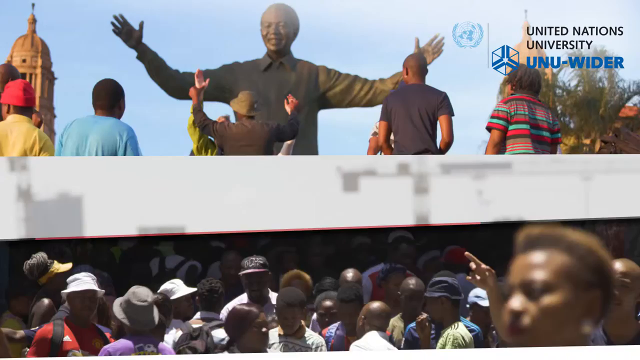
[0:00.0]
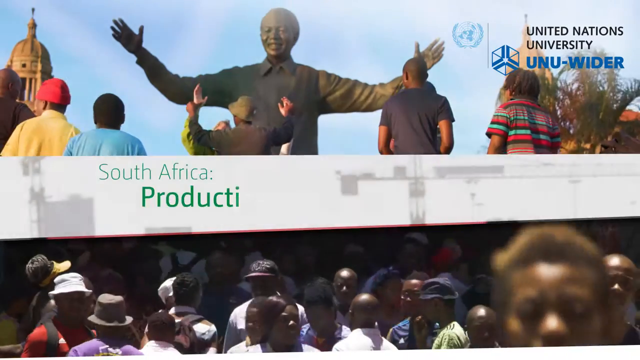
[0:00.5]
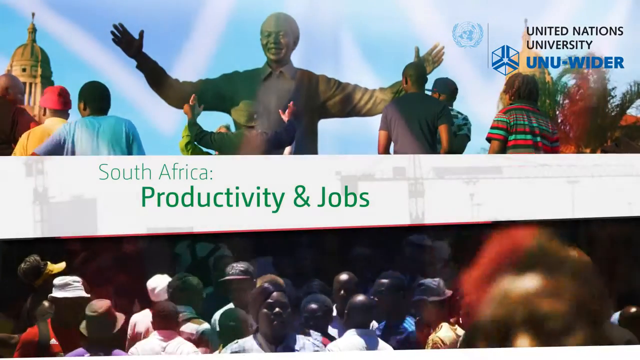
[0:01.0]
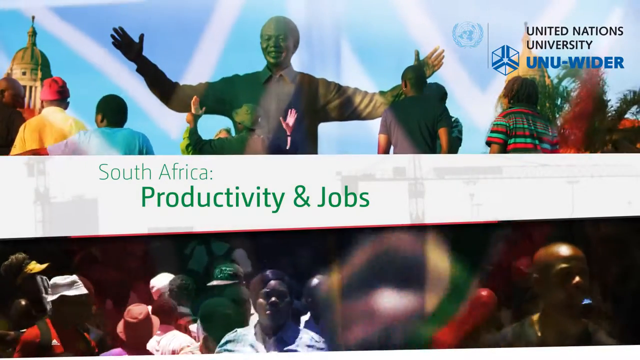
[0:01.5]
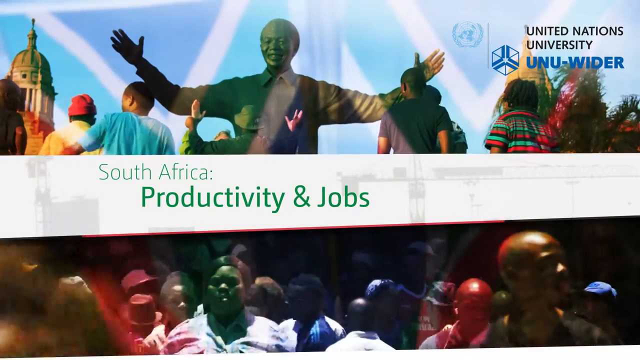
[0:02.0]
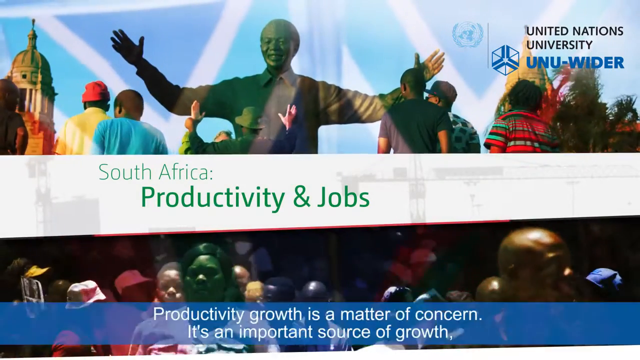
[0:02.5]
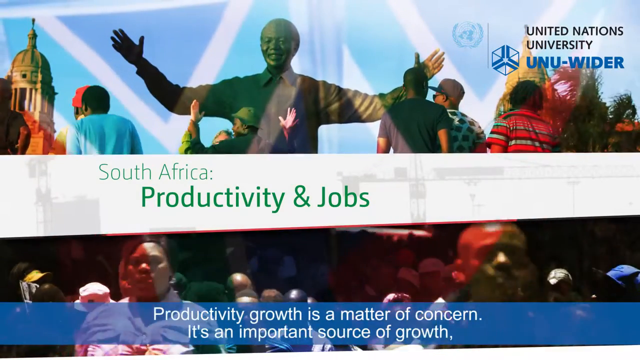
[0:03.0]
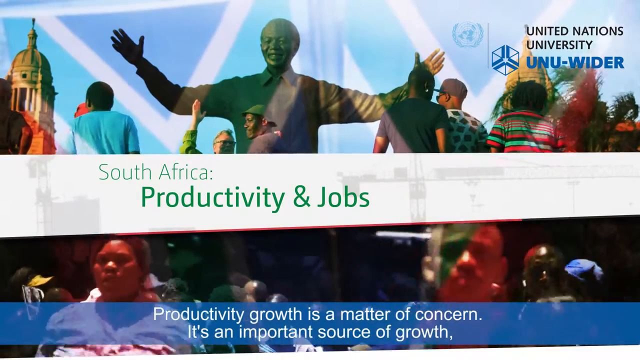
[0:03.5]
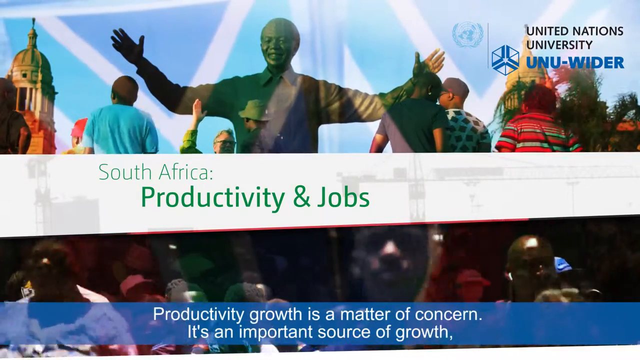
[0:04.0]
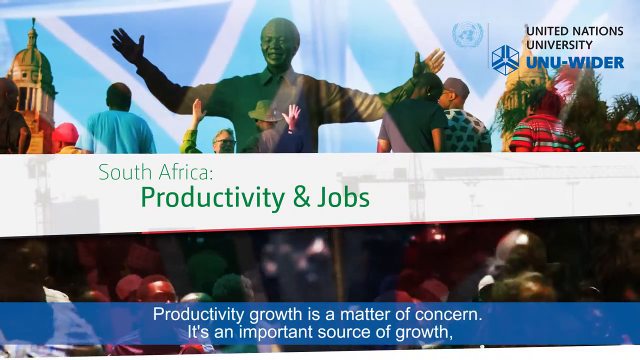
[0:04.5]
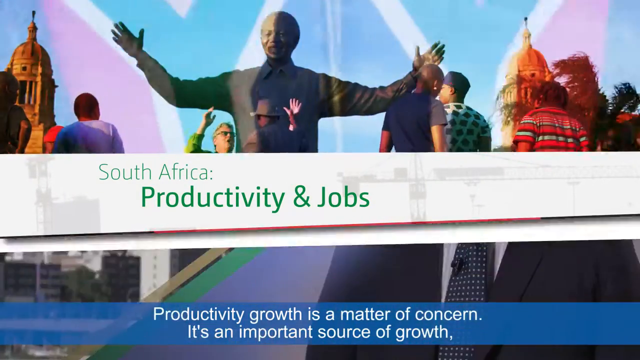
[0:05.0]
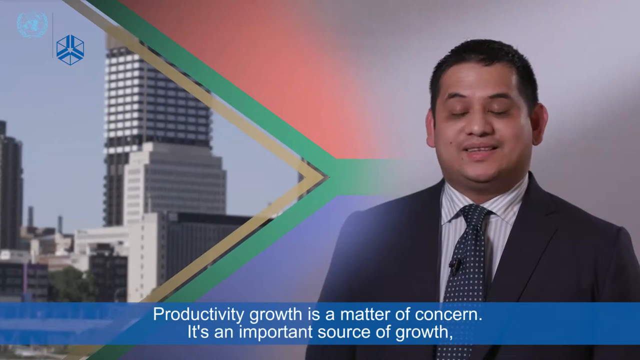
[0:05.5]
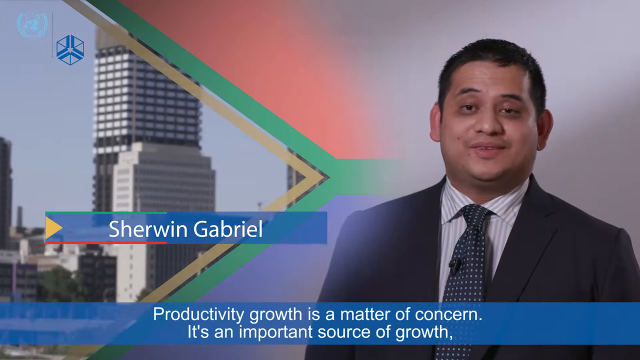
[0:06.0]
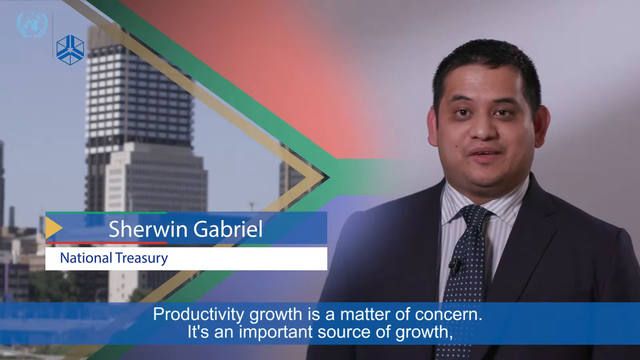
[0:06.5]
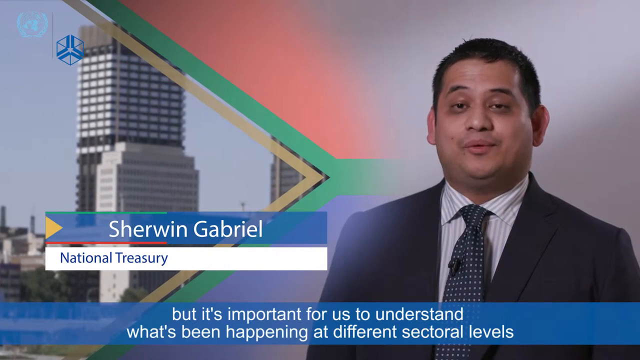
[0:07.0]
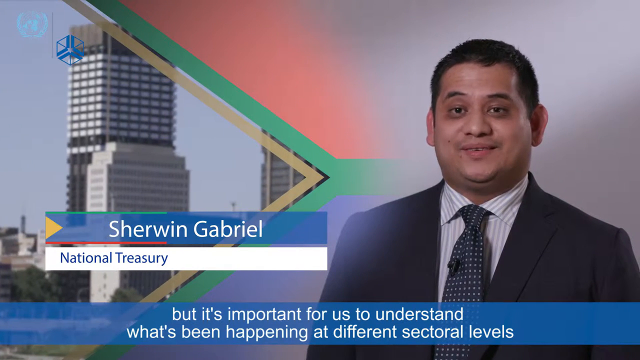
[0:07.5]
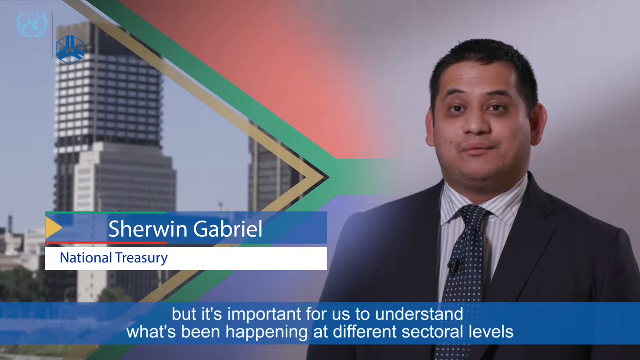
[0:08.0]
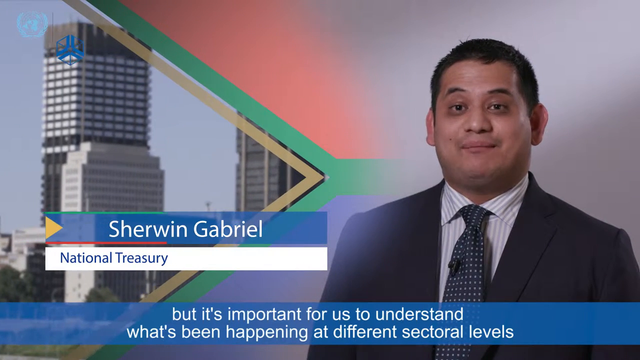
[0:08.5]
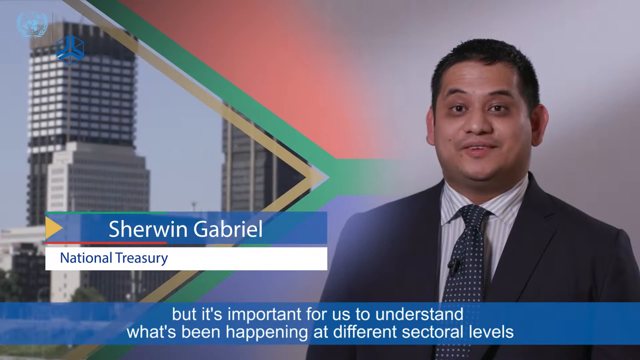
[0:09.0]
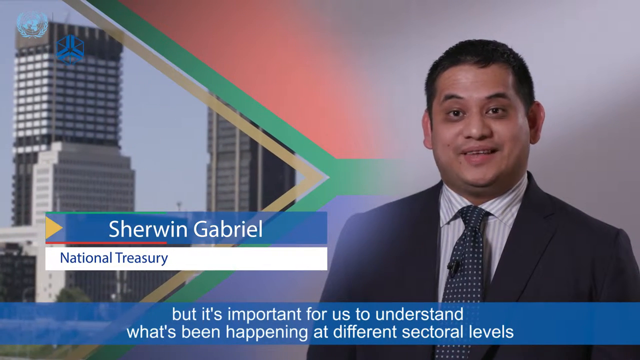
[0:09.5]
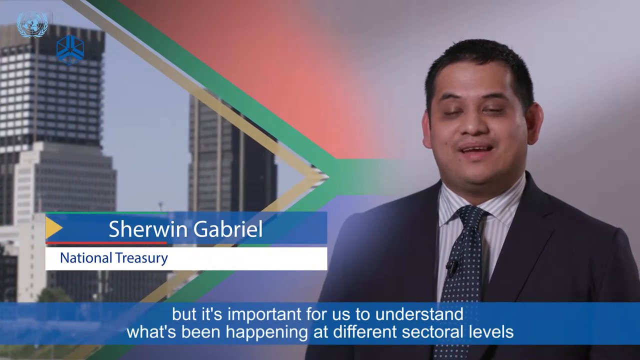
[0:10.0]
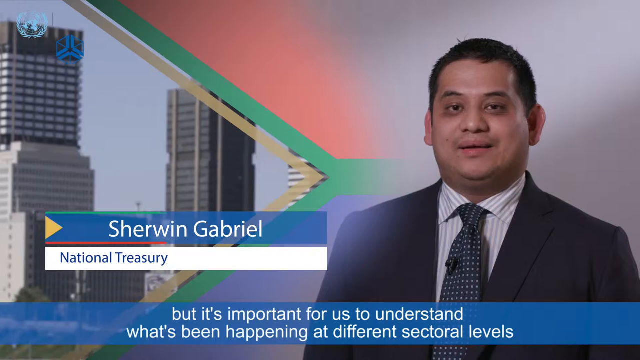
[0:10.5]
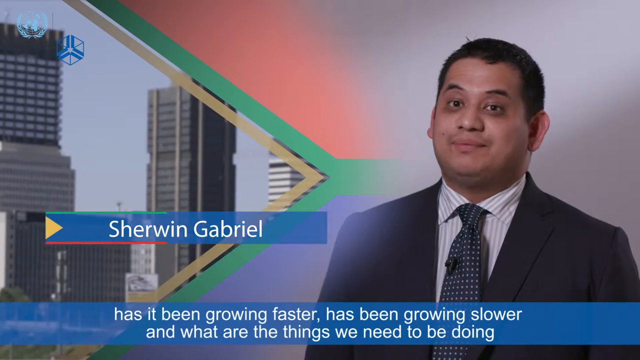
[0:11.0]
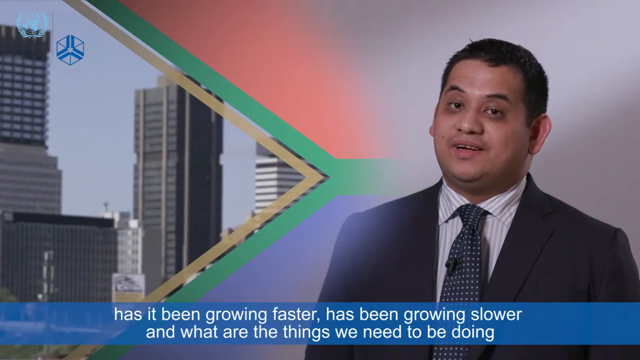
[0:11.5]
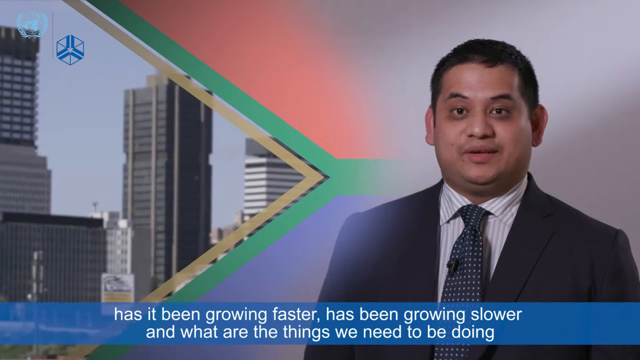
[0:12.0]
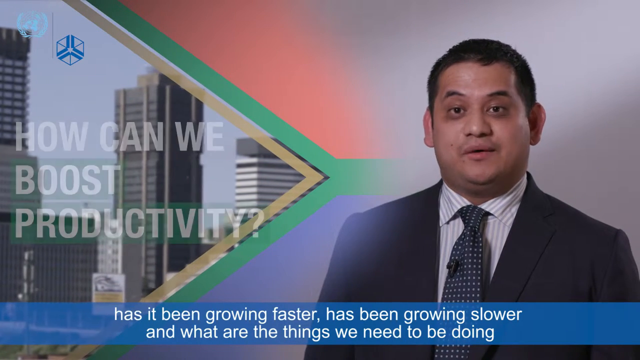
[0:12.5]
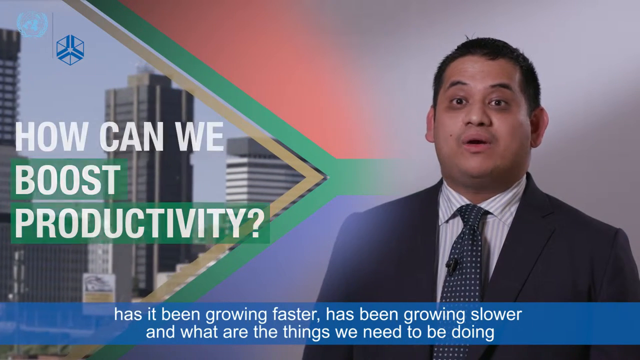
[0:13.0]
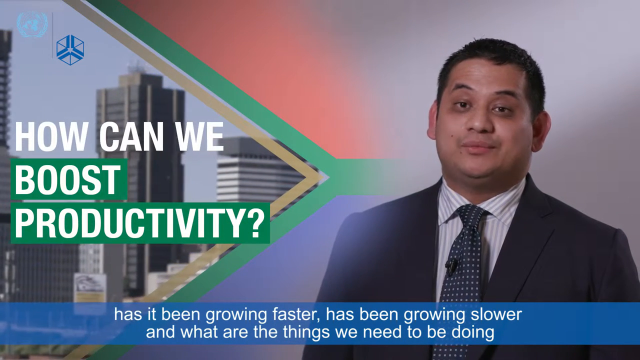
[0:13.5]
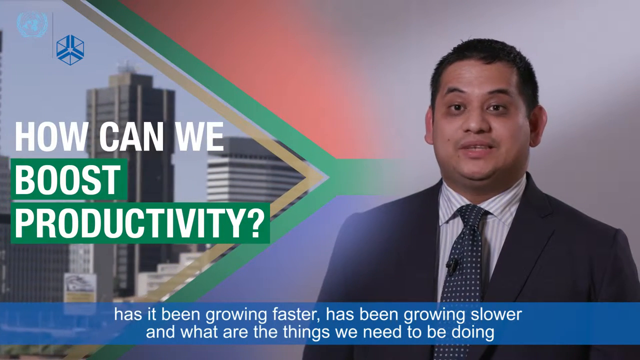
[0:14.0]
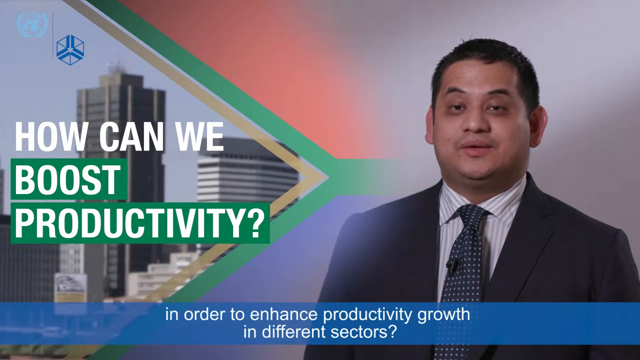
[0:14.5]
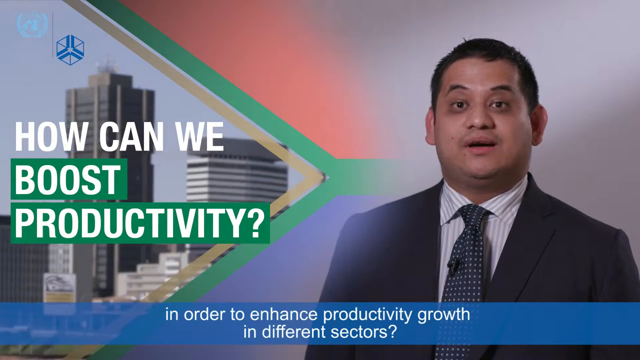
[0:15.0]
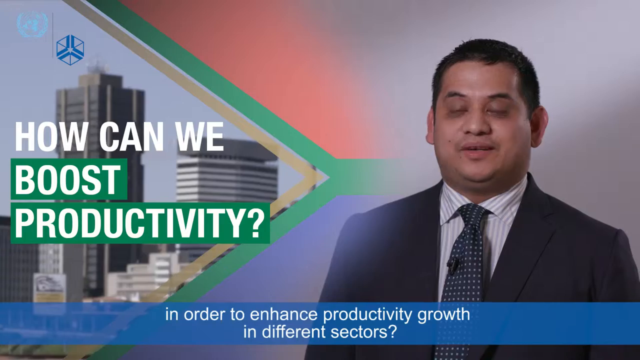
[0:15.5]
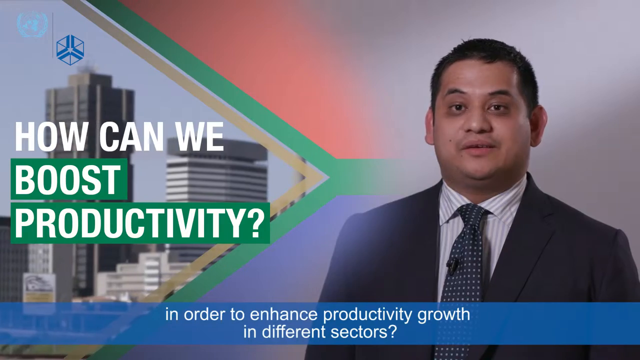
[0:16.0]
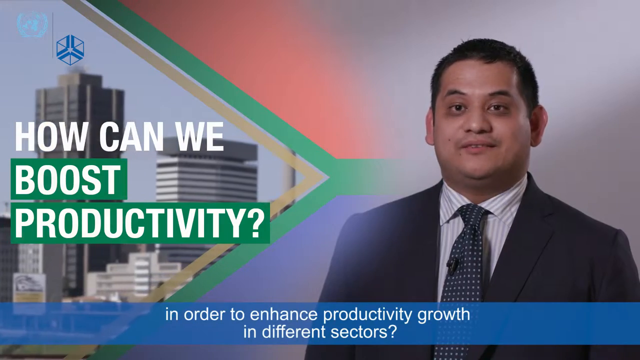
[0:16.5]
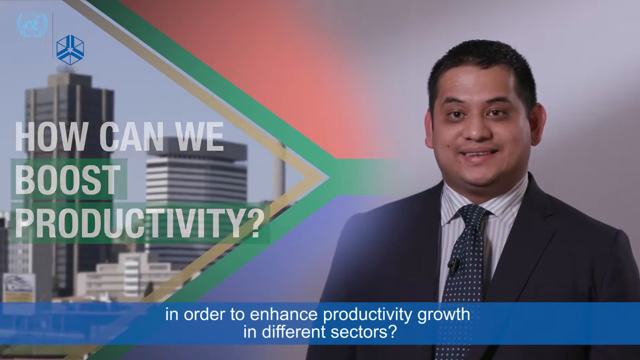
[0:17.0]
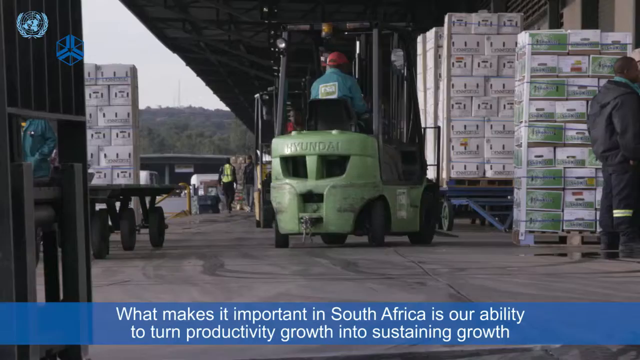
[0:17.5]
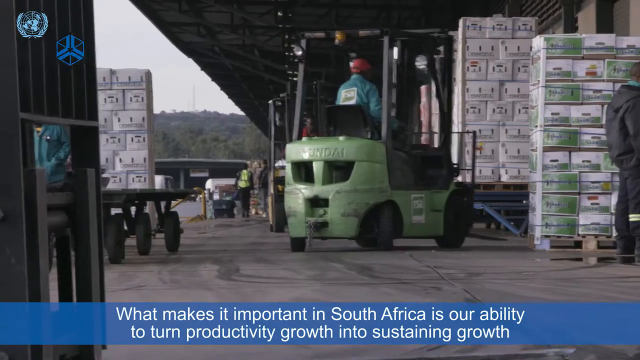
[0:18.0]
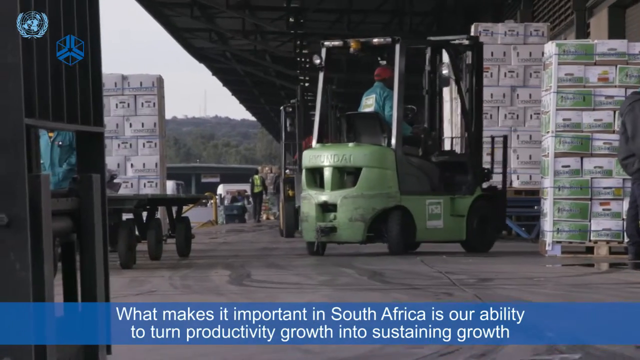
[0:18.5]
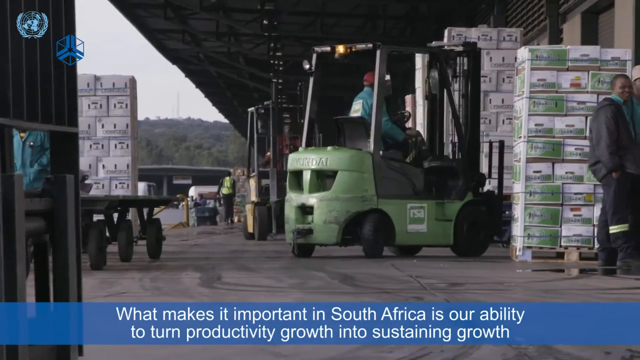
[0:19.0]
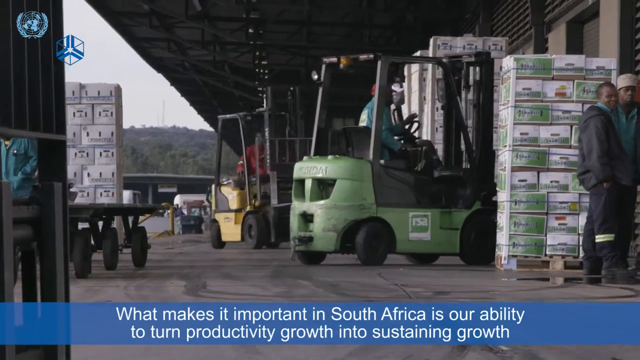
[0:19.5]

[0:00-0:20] The video opens on a statue of Nelson Mandela and a crowd of black people holding their arms up high, in a way similar to the statue. Text in the centre of the screen reads "South Africa, productivity and jobs", and the top right-hand corner shows "United Nations University". Text then appears at the bottom of the screen about productivity growth in South Africa. The scene transitions to a presenter, with his name shown on the left as Sherwin Gabriel, the national treasurer. On-screen text mentions that growth "is a matter of concern and it's important to understand what's been happening at different sectorial levels". The footage relates to how productivity can be boosted, and a warehouse is shown.